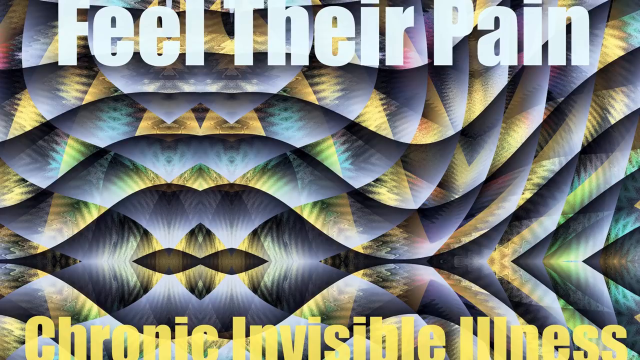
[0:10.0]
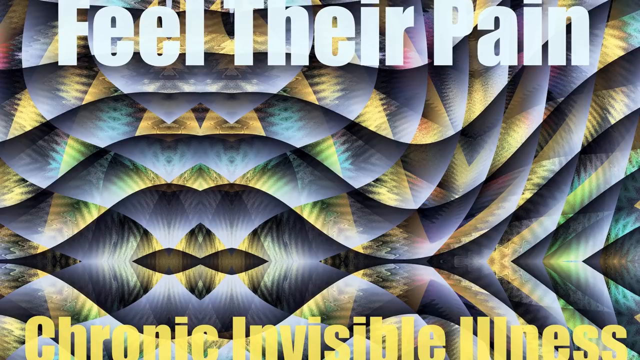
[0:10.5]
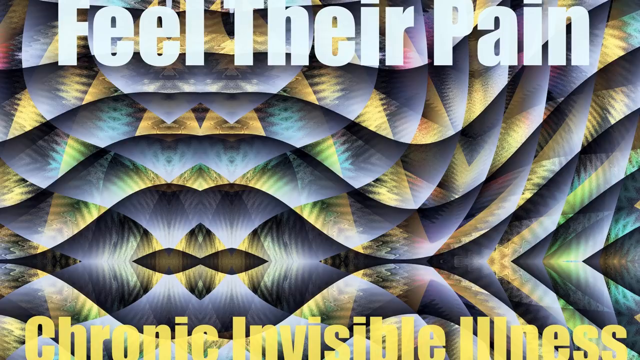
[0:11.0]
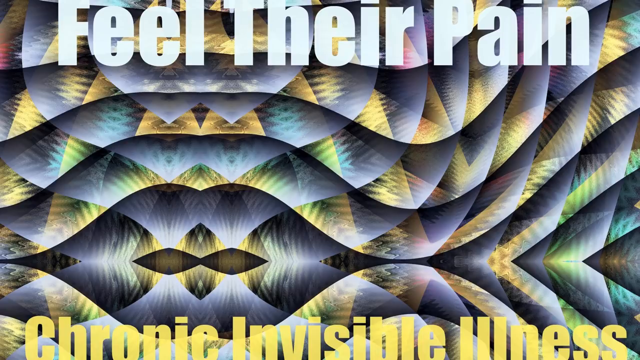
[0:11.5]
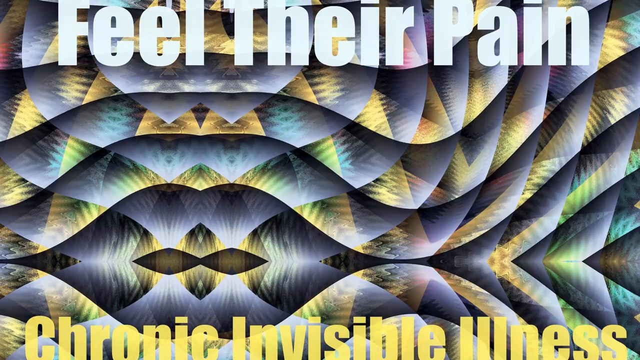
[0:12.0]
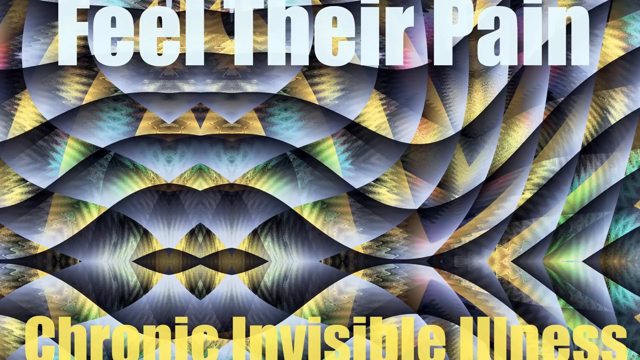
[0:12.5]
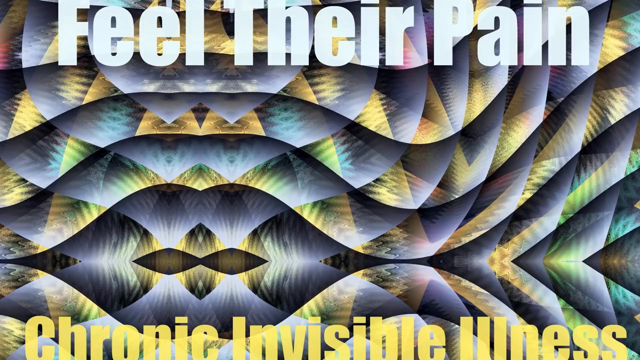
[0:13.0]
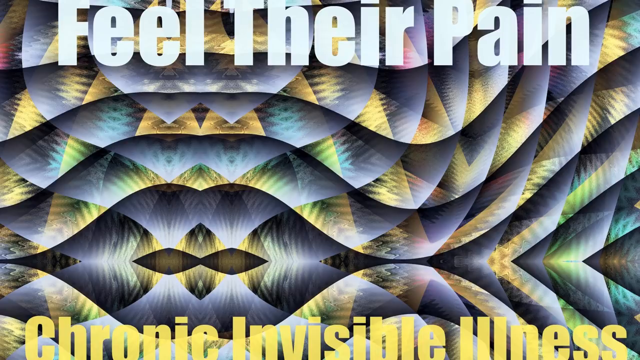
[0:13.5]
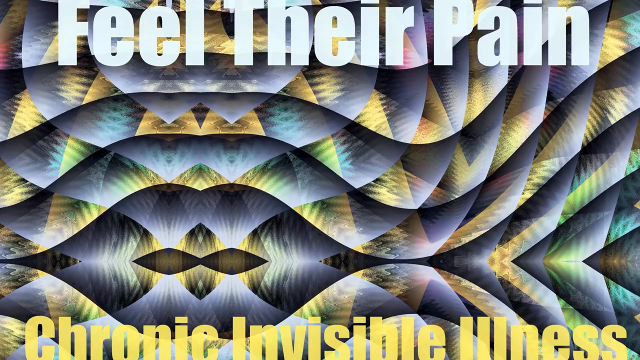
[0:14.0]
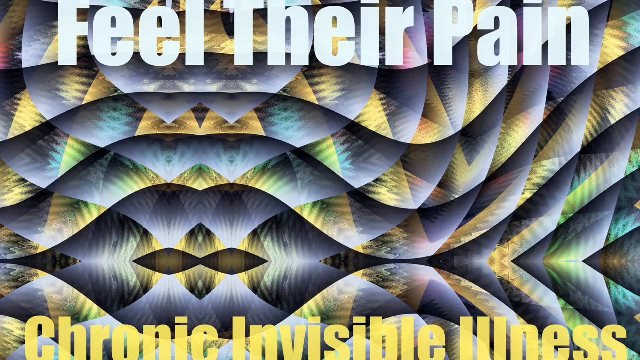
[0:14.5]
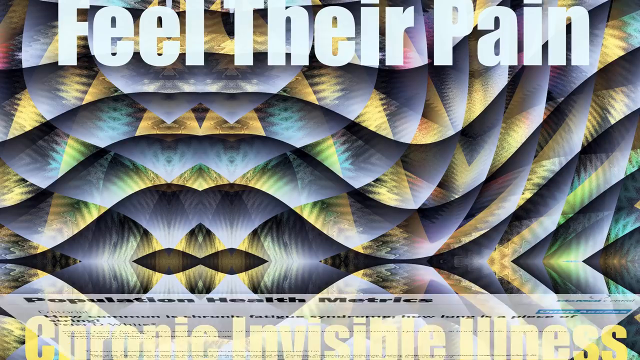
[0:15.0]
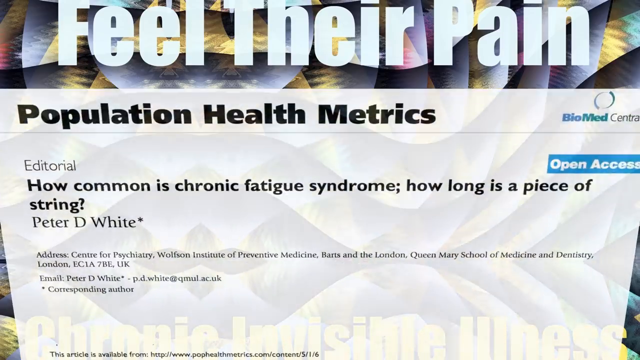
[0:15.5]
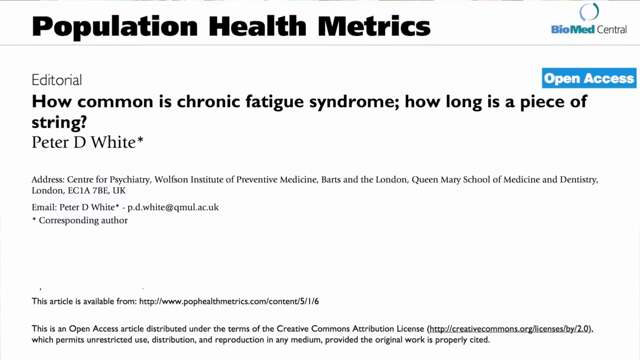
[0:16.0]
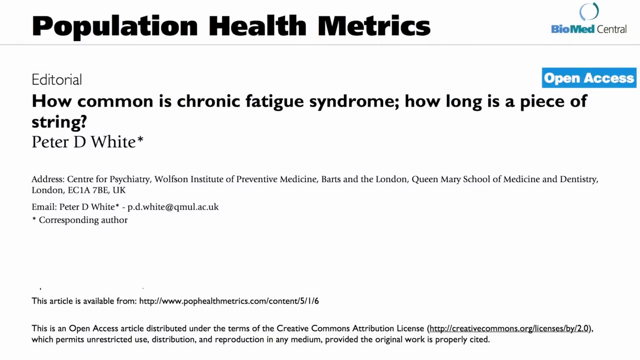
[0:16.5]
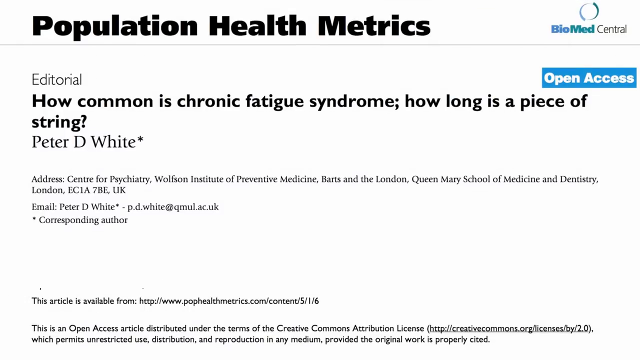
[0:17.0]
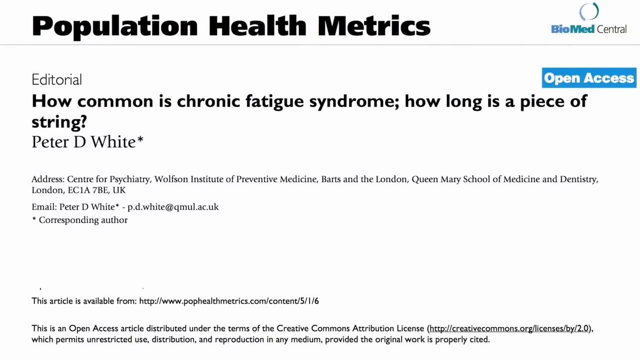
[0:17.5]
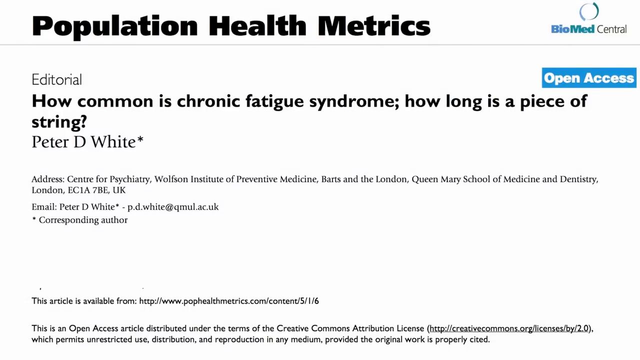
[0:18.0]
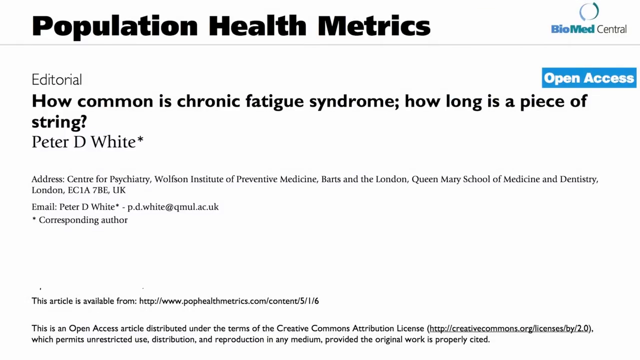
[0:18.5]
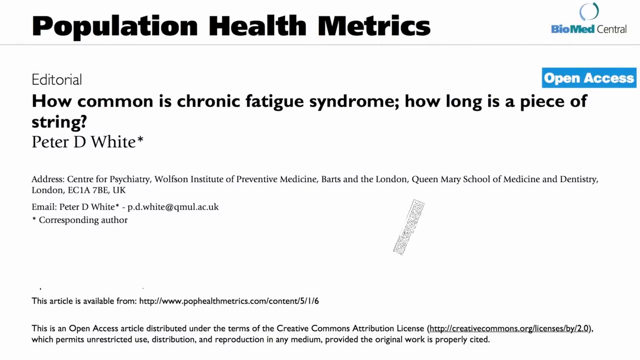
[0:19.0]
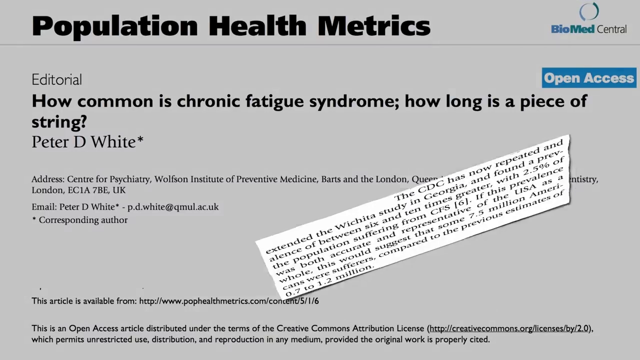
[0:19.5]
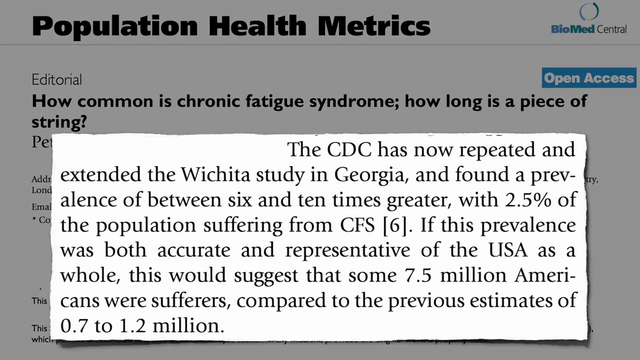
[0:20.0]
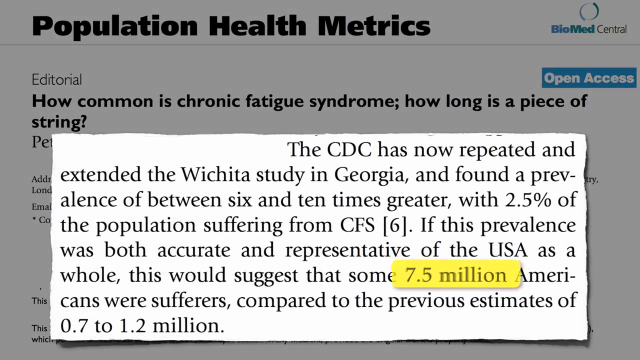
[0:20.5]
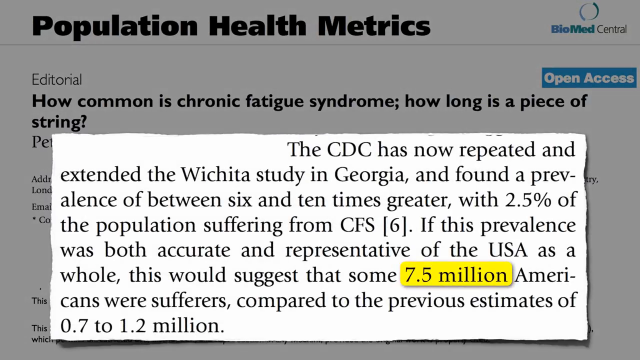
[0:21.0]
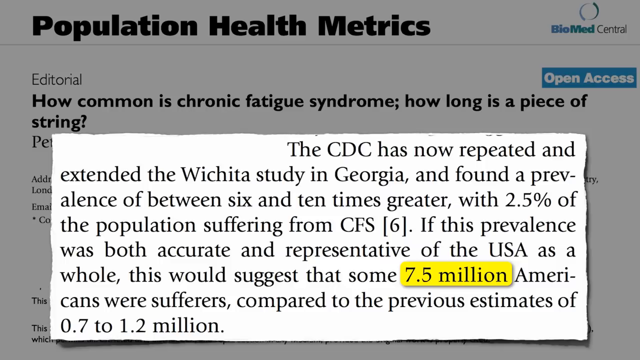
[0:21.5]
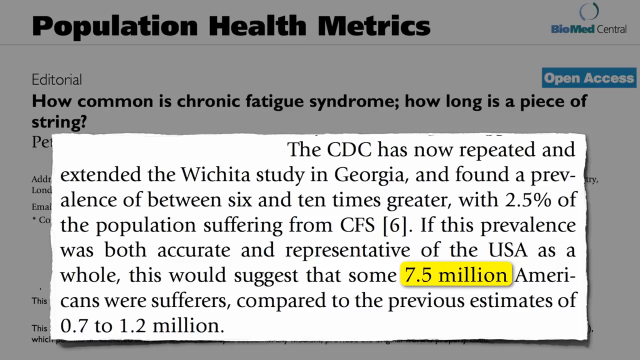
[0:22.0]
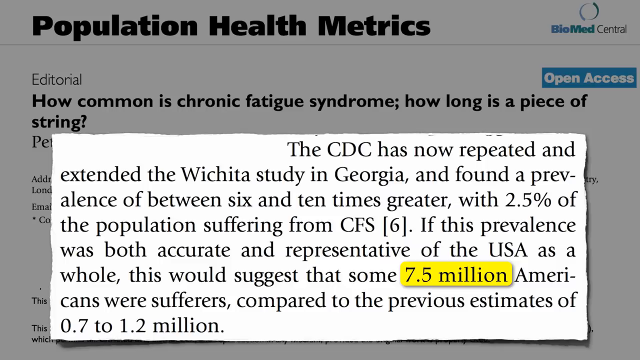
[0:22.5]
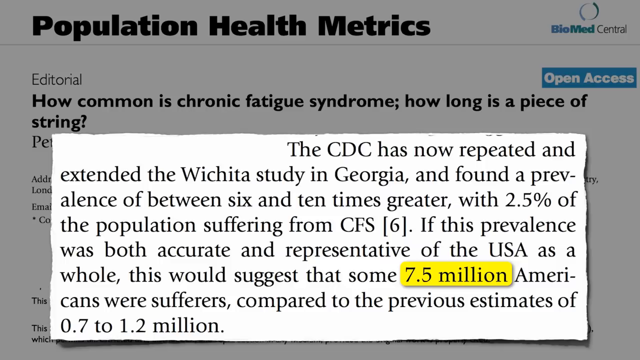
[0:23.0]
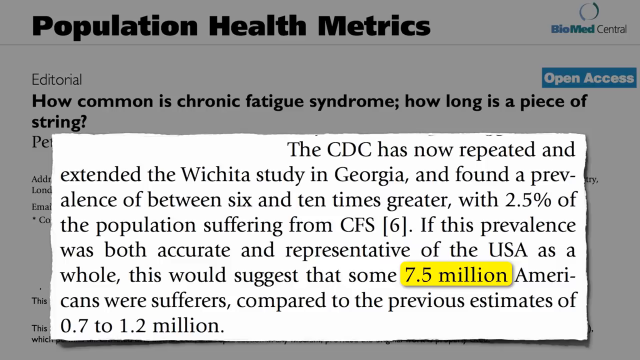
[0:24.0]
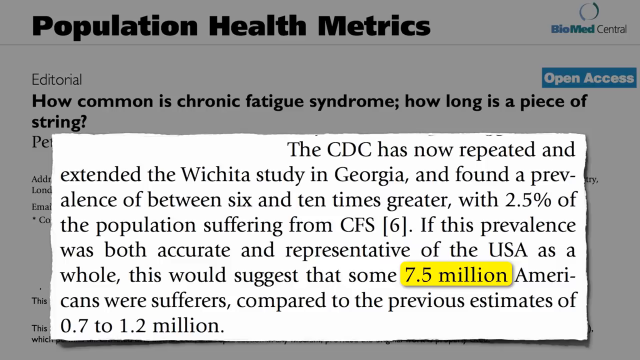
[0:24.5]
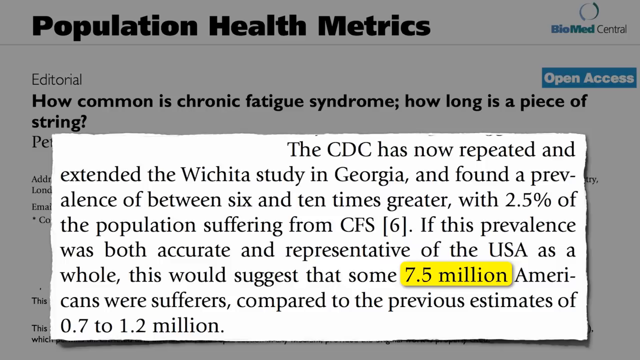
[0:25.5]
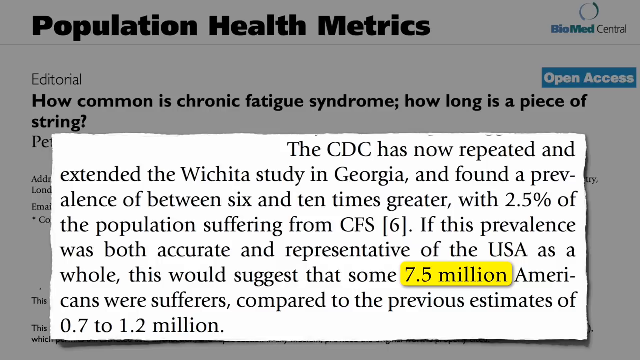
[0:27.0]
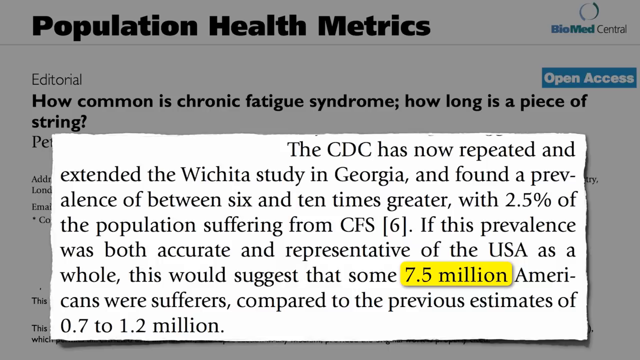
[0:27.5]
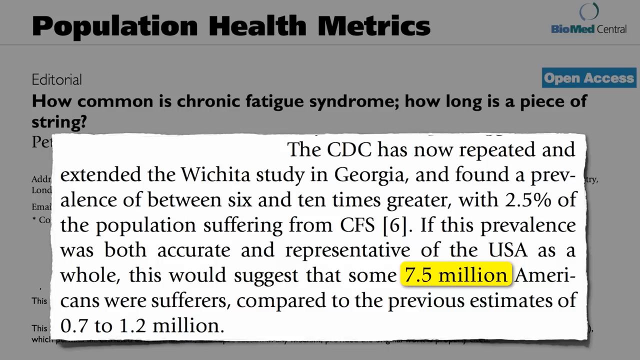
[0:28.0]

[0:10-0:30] An abstract, colorful pattern of waves in shades of blue, green, yellow, black and brown fills the screen. At the top, "feel their pain" is written in white in big, bold, thick letters, and at the bottom "chronic invisible illness" is written in yellow in a similar font, both over the pattern. The next screen slides in from the bottom: a page titled "population health metrics" that looks like a newspaper article or a medical journal. A BioMed Central logo is on the right side with an "open access" label below it, and the page is marked "editorial". The title "How common is chronic fatigue syndrome? How long is a piece of string" is written in black bold letters, followed by "Peter D. White". Then an article clipping appears on the screen: a single eight-line paragraph on a white background about chronic fatigue syndrome and a related study in Georgia, with the number "7.5 million" in the third line from the end highlighted in yellow.